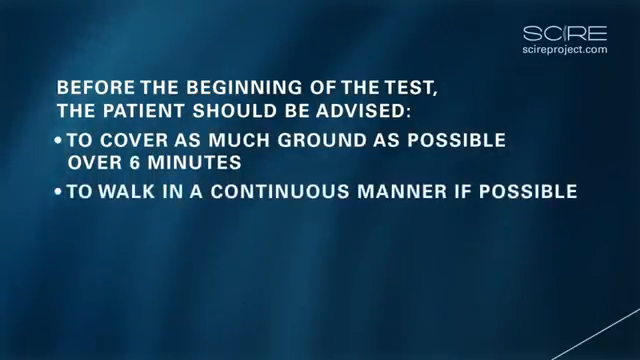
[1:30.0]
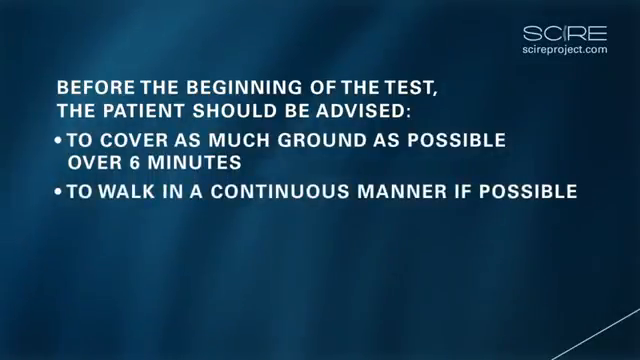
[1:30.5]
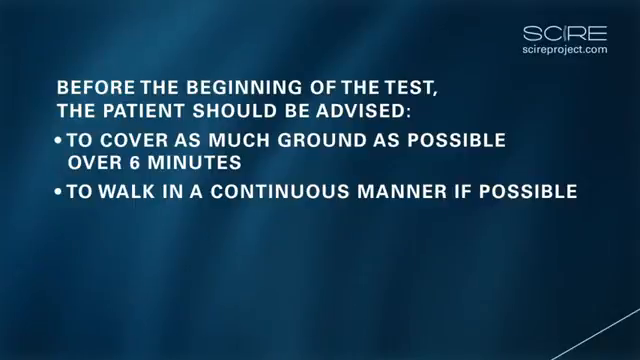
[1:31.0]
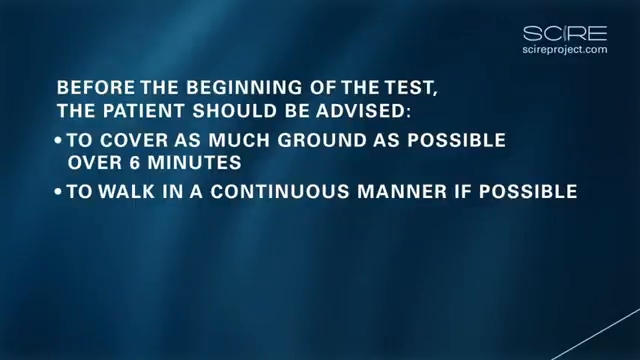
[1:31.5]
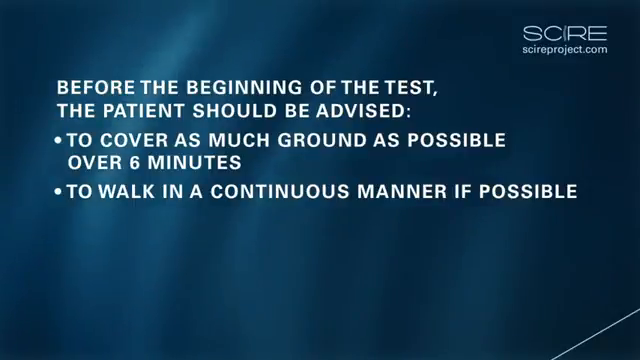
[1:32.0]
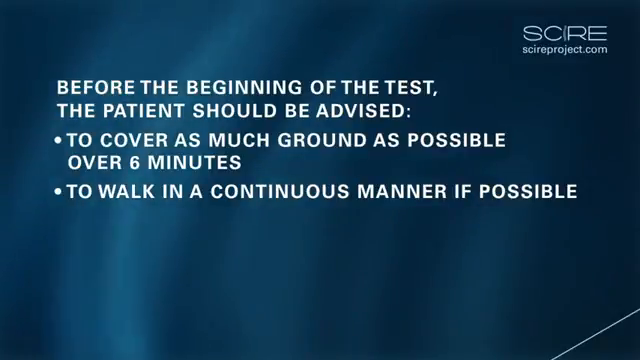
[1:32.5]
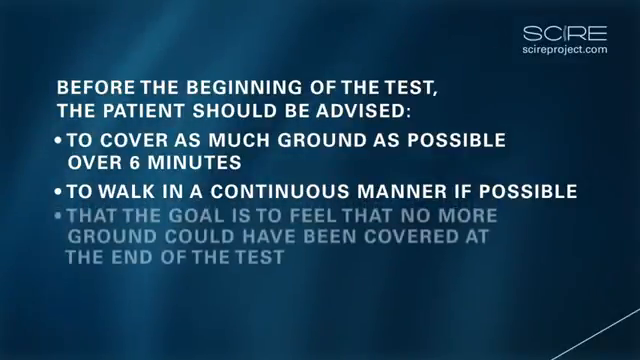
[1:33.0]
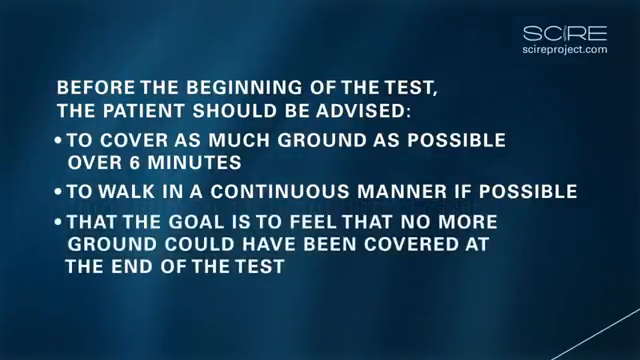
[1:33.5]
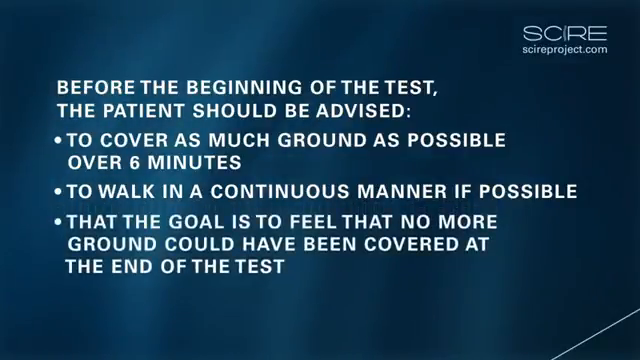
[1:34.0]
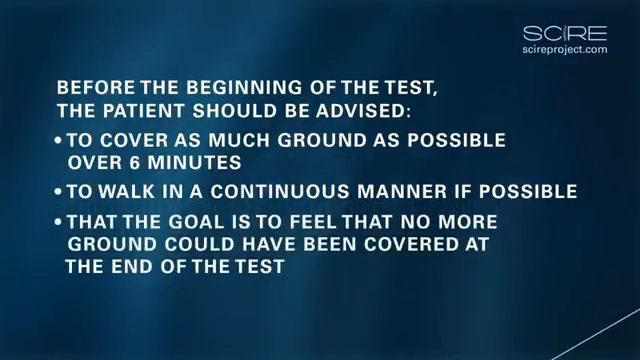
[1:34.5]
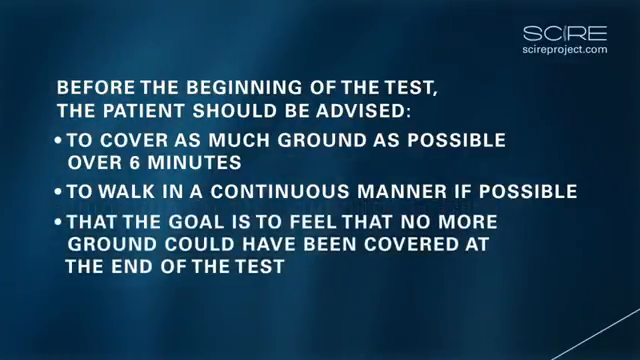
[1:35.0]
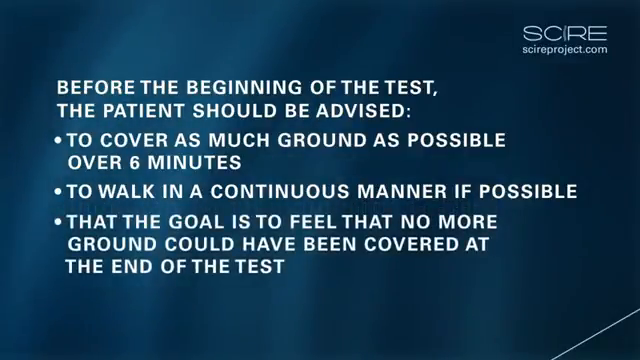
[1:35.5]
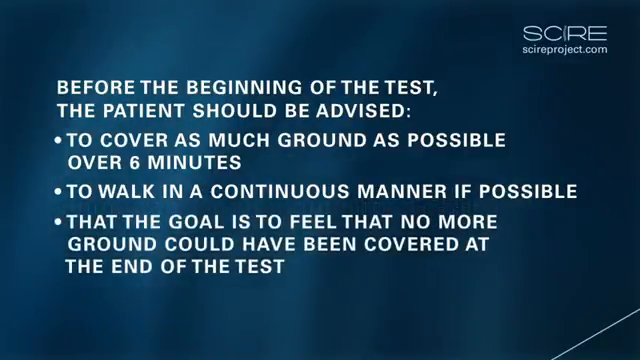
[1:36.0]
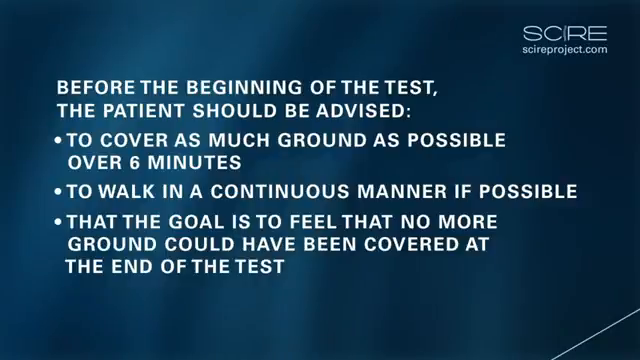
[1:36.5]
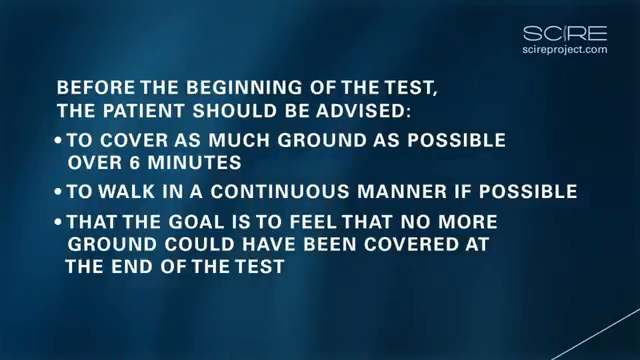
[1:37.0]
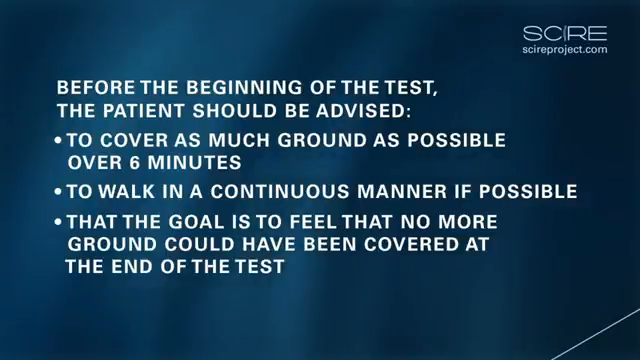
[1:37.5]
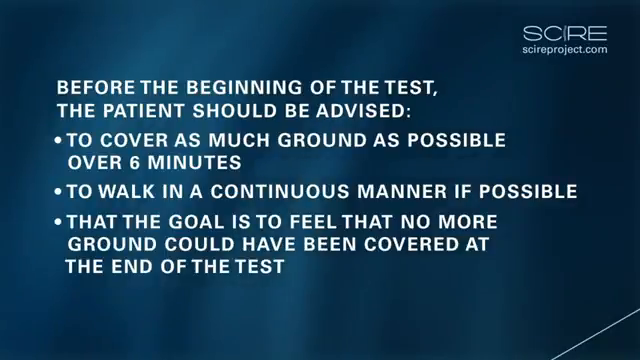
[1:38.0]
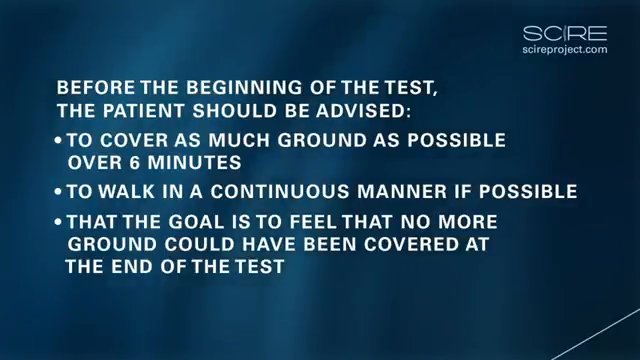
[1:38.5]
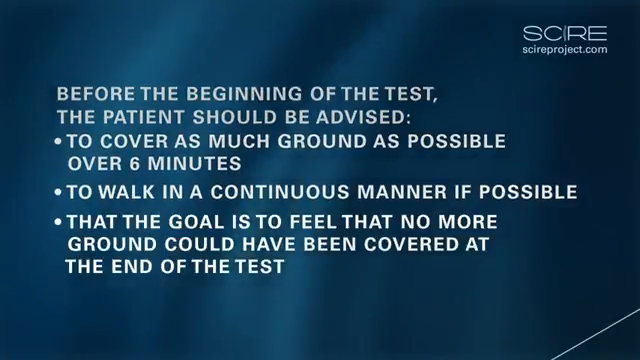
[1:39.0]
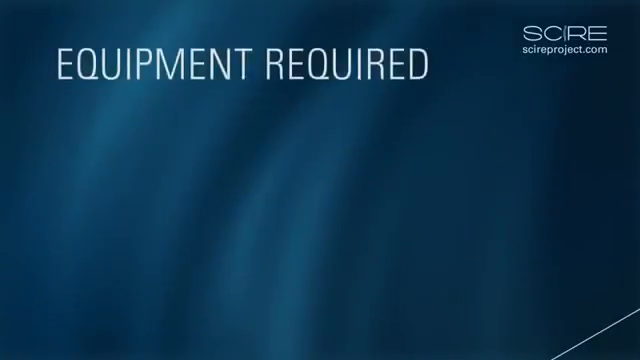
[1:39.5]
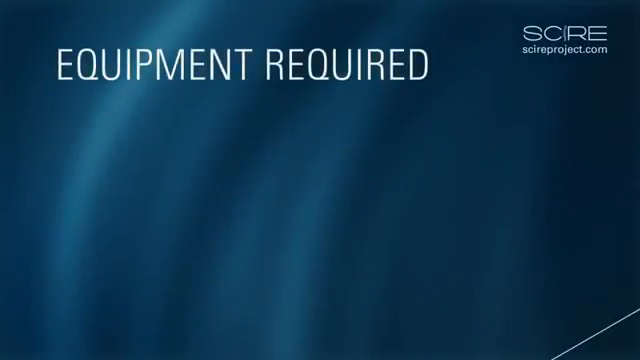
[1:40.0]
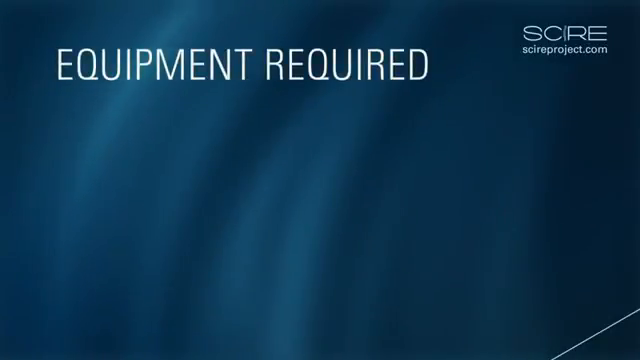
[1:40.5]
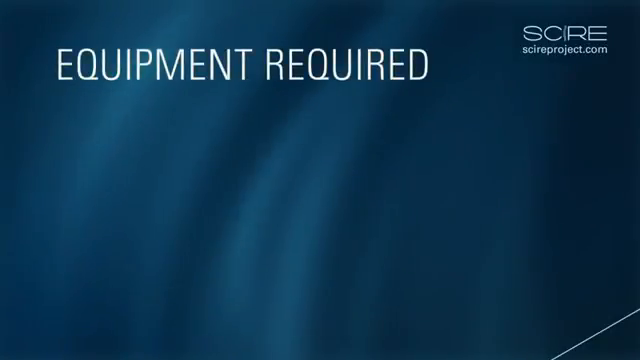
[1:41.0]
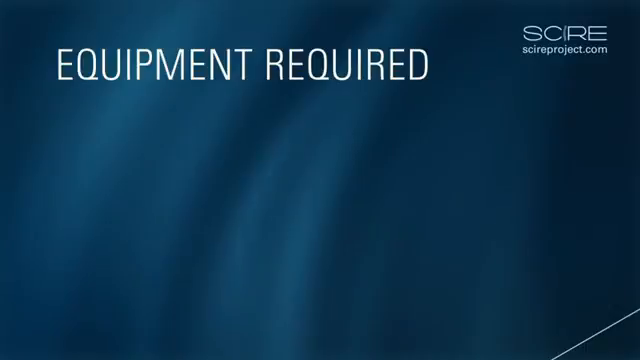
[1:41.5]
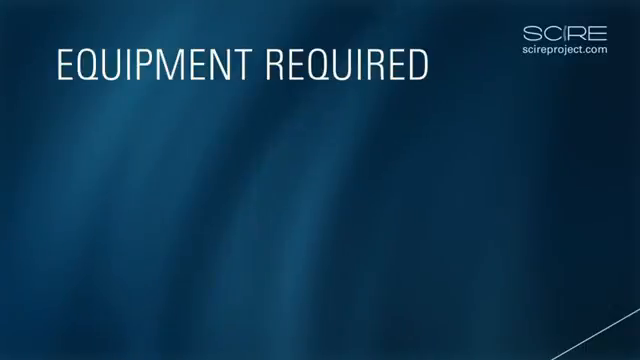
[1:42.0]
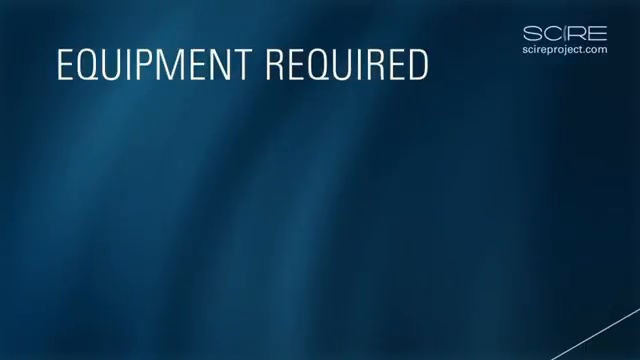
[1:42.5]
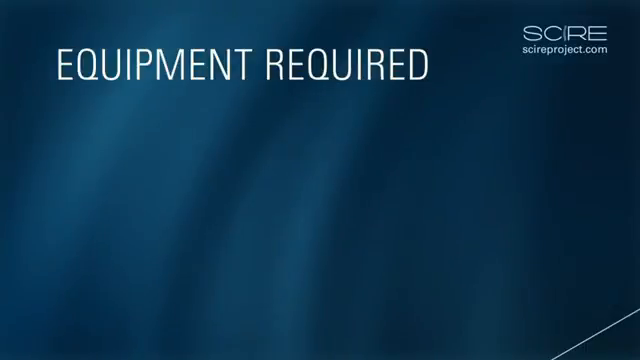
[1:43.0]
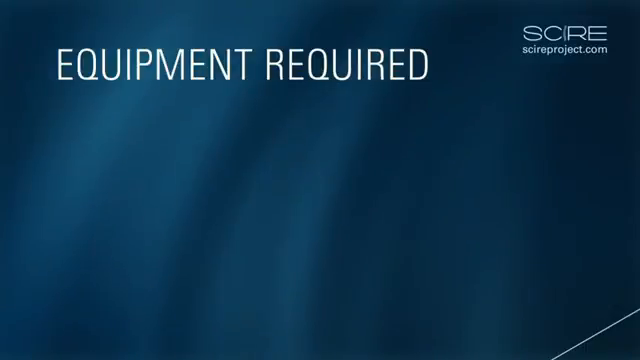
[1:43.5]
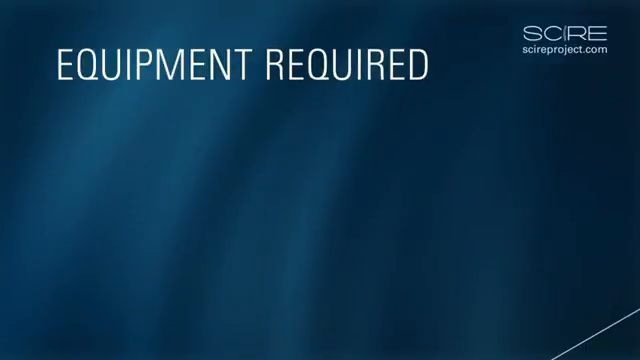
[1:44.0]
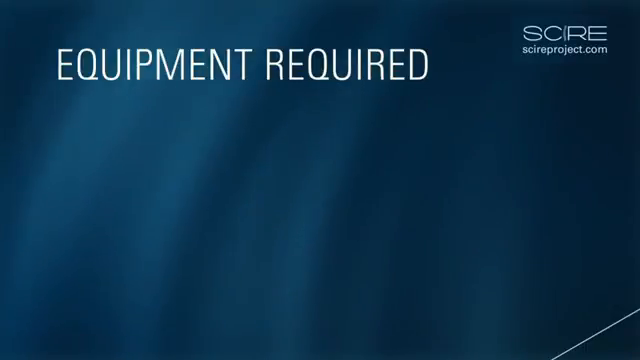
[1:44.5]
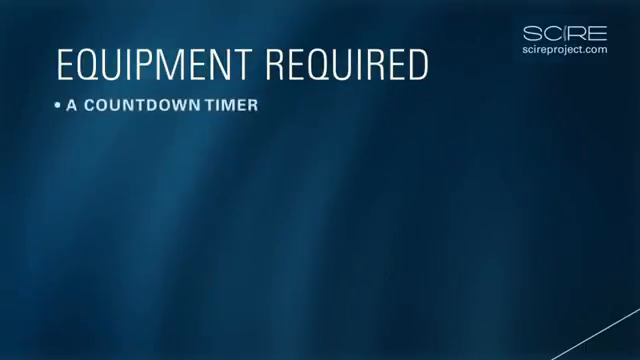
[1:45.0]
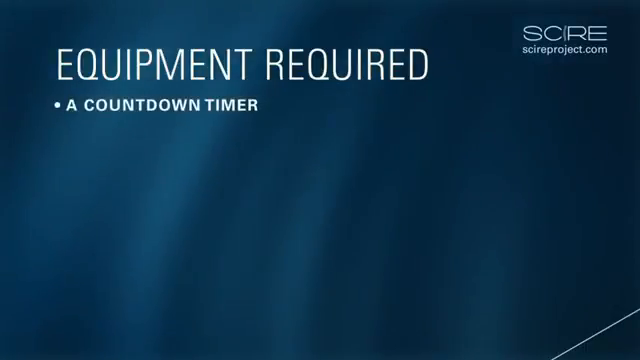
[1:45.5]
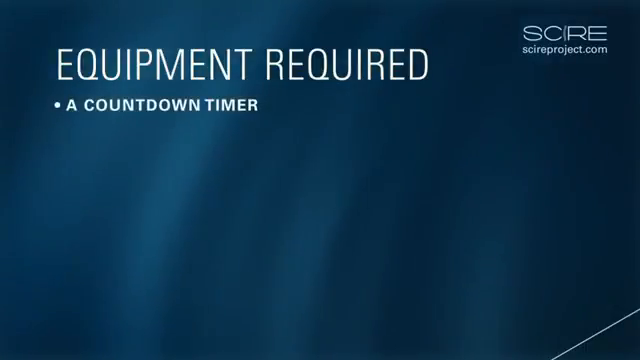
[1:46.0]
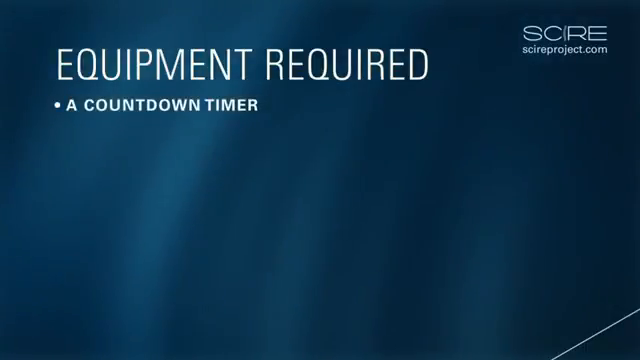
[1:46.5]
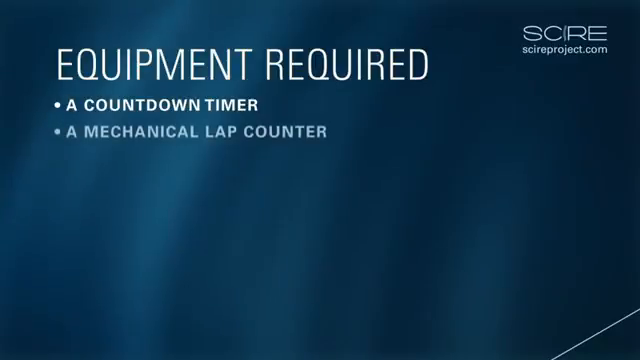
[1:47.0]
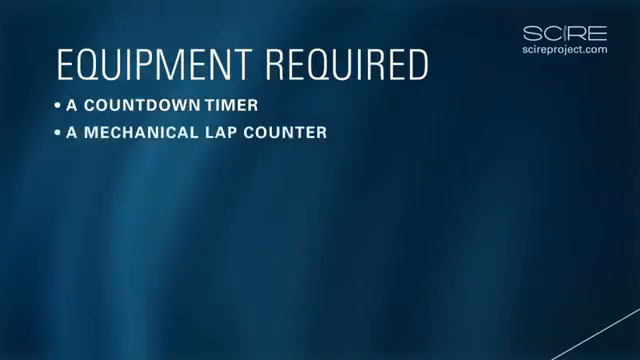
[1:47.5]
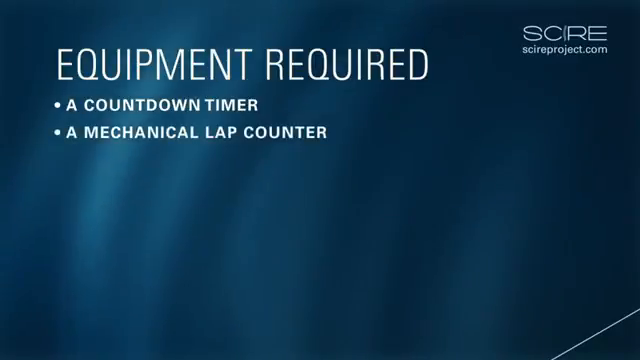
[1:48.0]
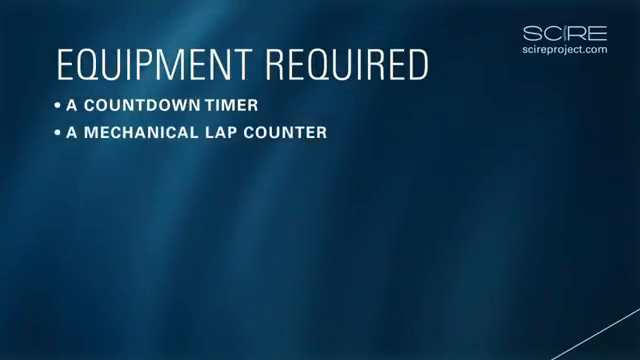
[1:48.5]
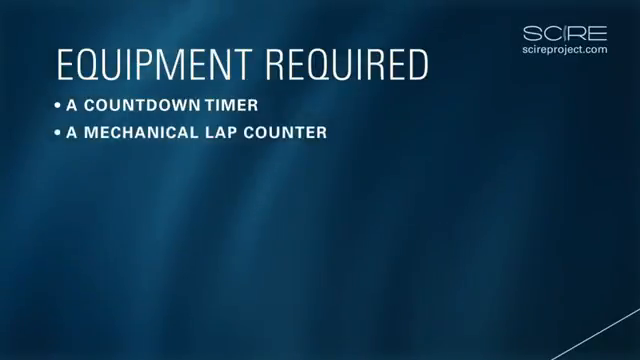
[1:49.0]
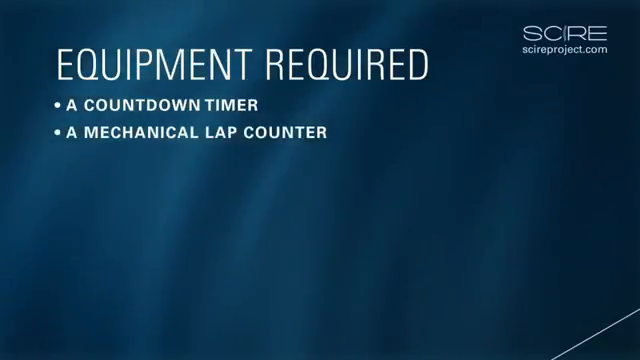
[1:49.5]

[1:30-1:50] A third bullet point appears at the bottom reading "the goal is to feel that no more ground could have been covered at the end of the test", completing the three points the patient should be advised of. This remains on screen for five seconds, then the text reads "equipment required" with the bullet points "a countdown timer", "a mechanical lap counter" and "cones to mark the turnaround". The background remains an indistinct blue with a light like northern lights.